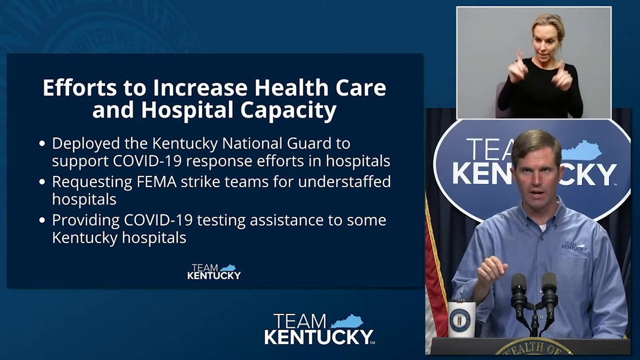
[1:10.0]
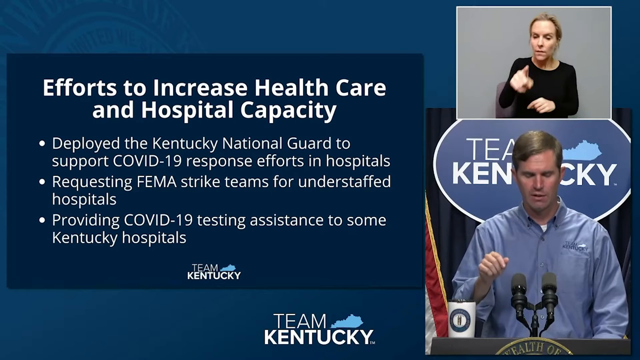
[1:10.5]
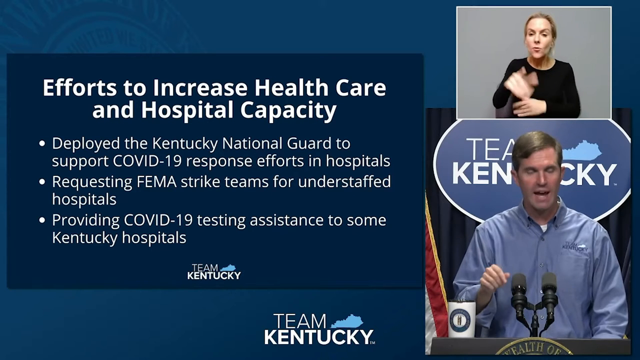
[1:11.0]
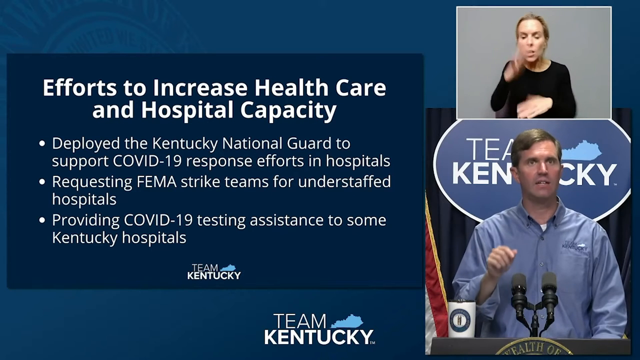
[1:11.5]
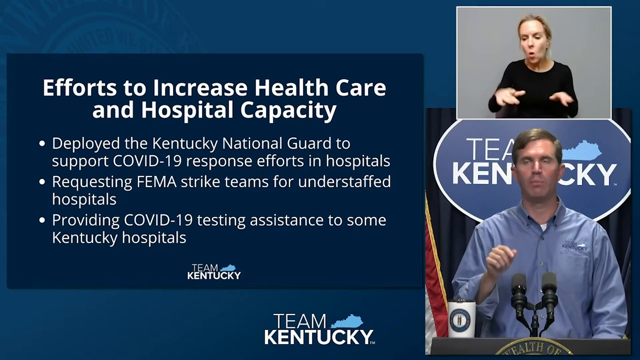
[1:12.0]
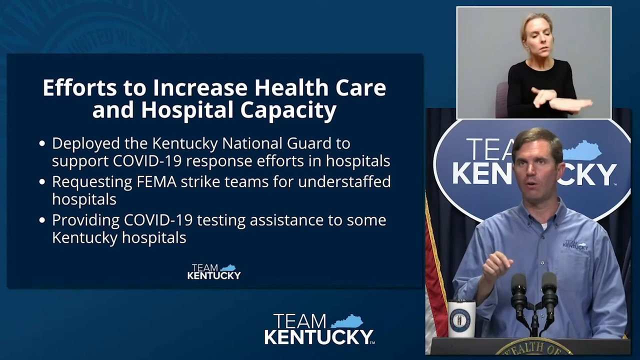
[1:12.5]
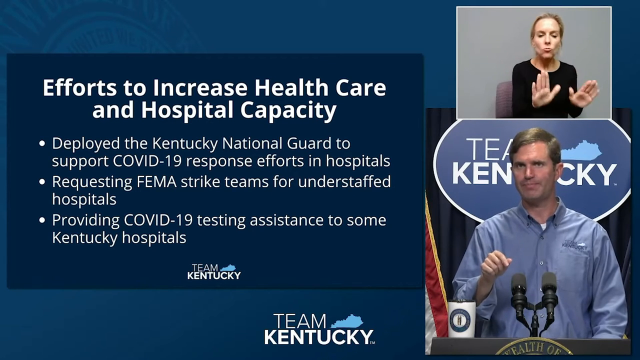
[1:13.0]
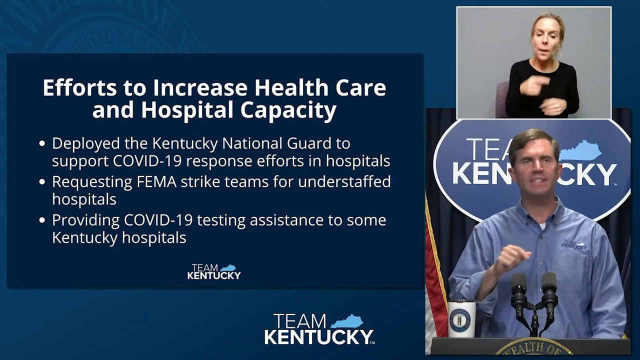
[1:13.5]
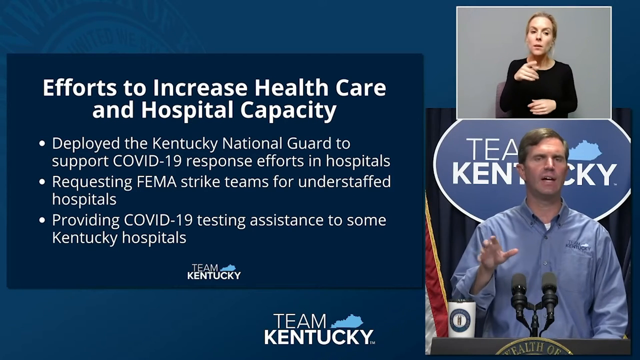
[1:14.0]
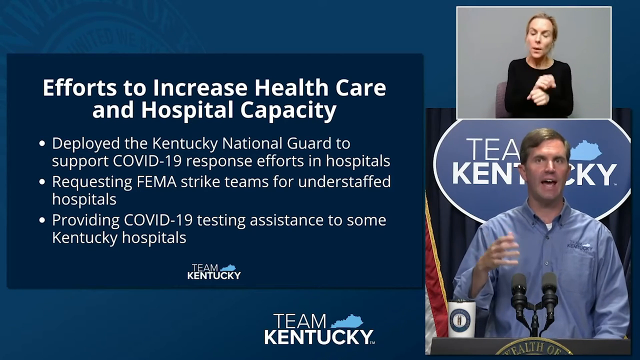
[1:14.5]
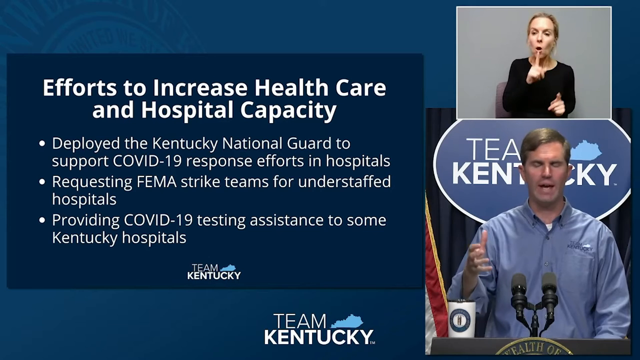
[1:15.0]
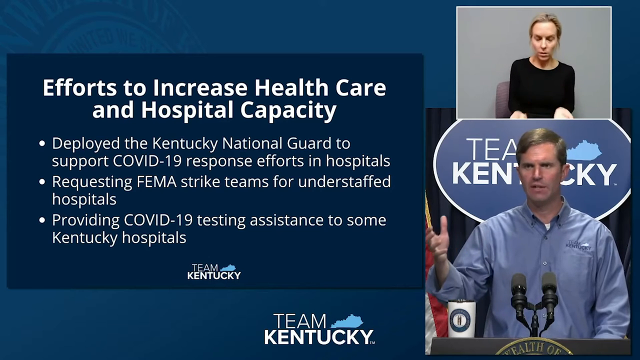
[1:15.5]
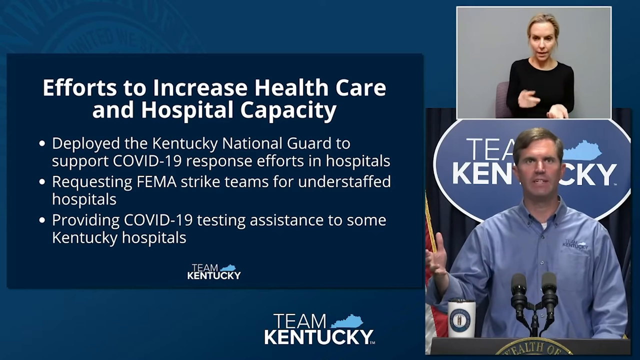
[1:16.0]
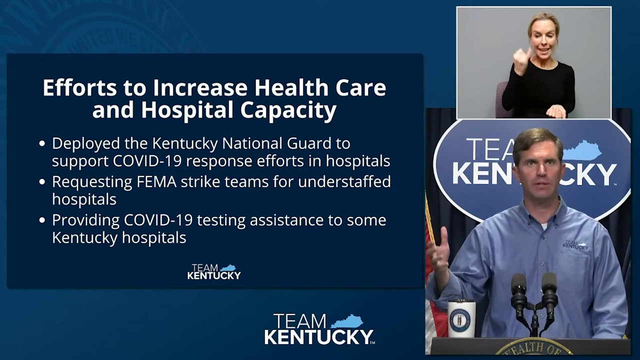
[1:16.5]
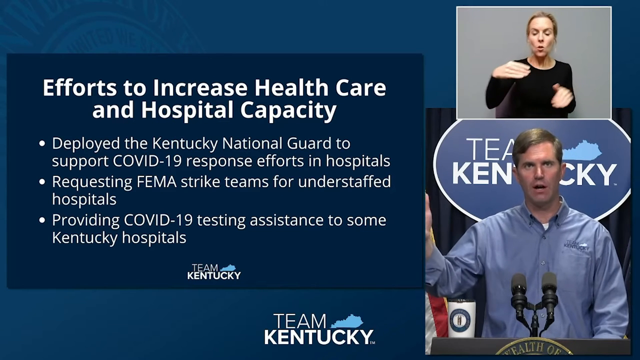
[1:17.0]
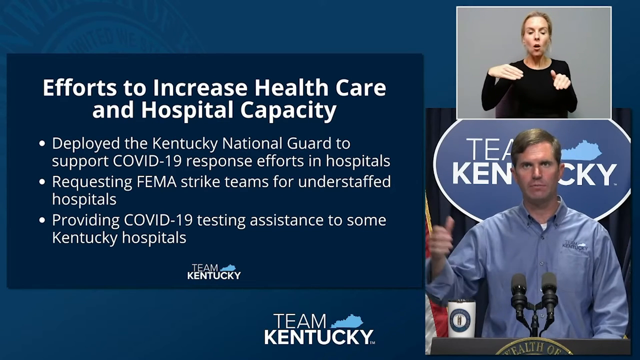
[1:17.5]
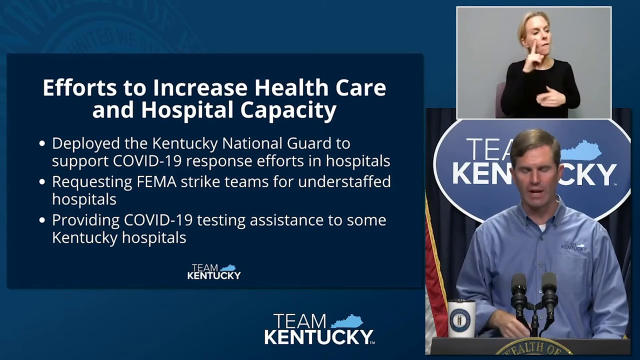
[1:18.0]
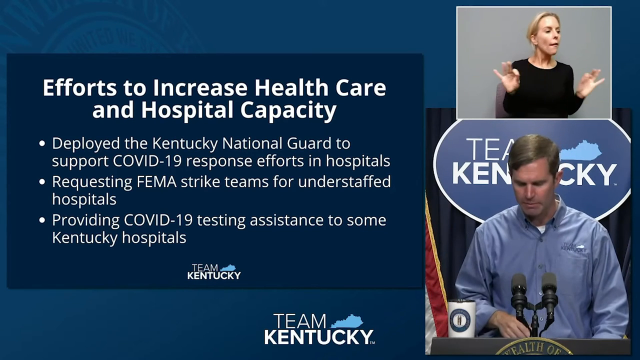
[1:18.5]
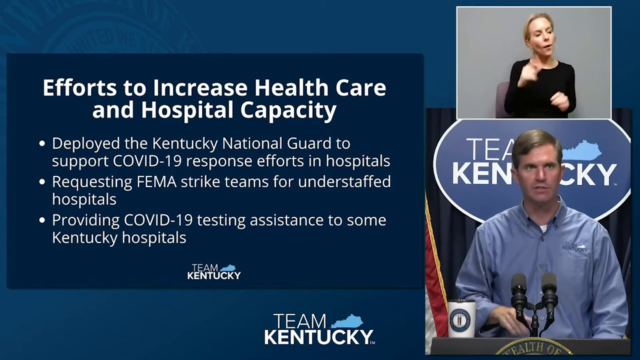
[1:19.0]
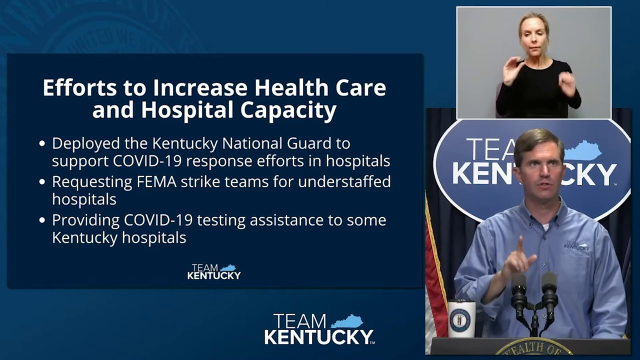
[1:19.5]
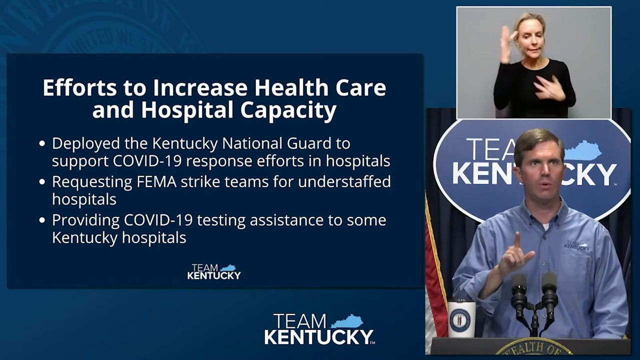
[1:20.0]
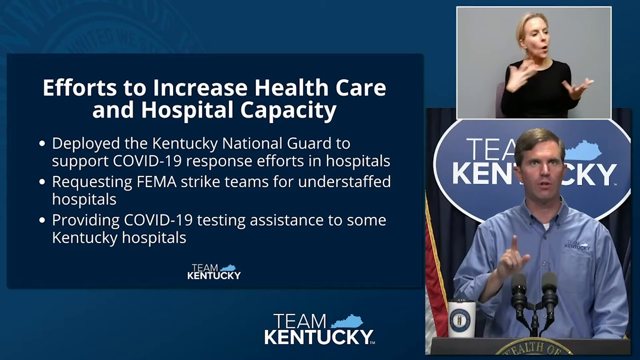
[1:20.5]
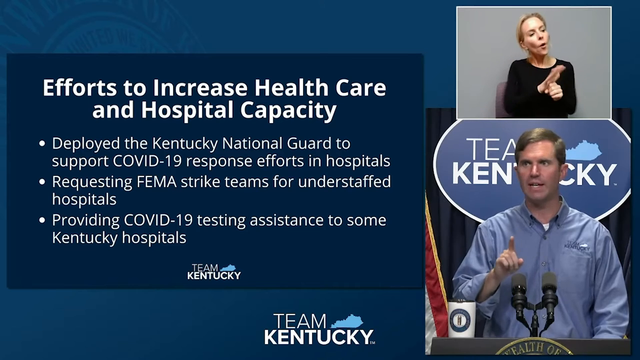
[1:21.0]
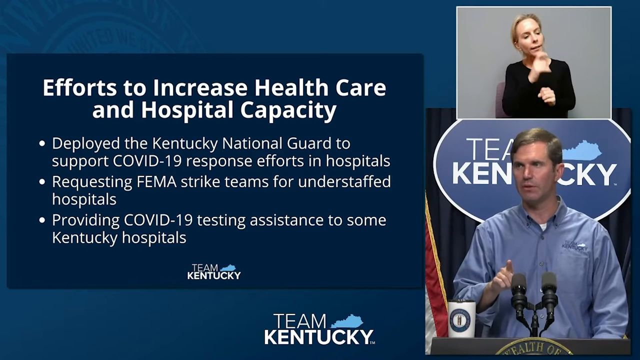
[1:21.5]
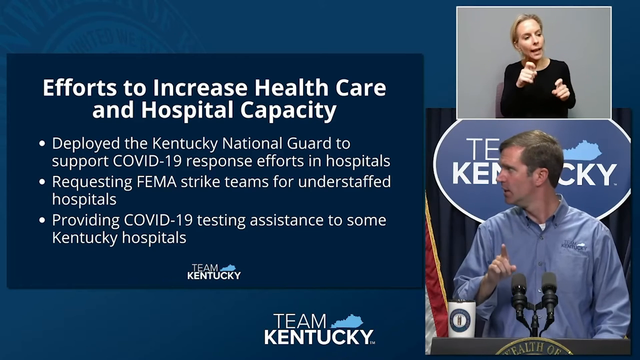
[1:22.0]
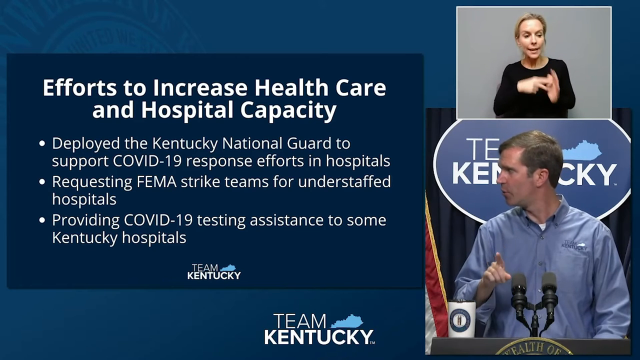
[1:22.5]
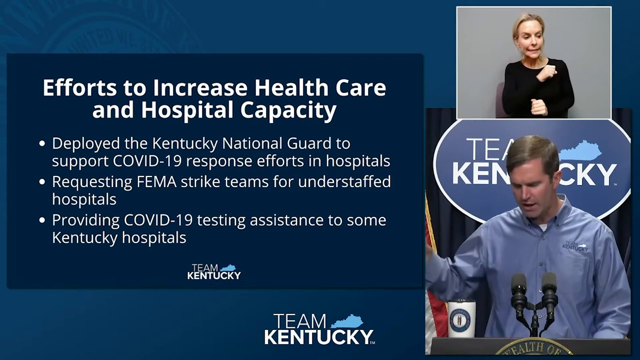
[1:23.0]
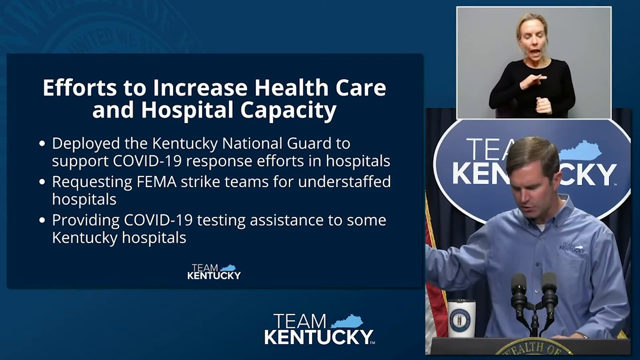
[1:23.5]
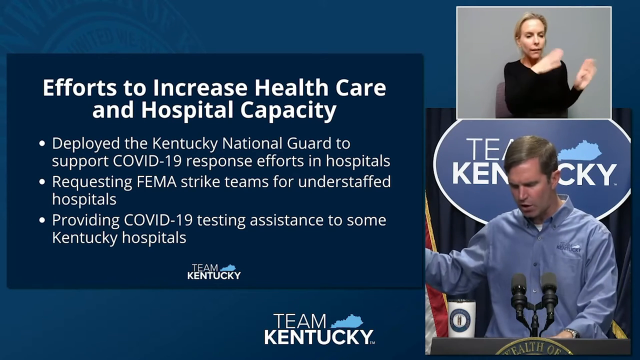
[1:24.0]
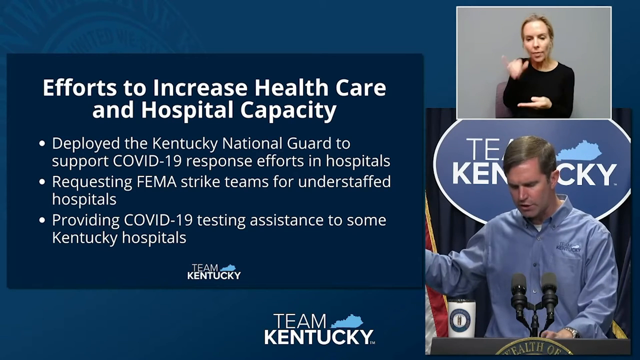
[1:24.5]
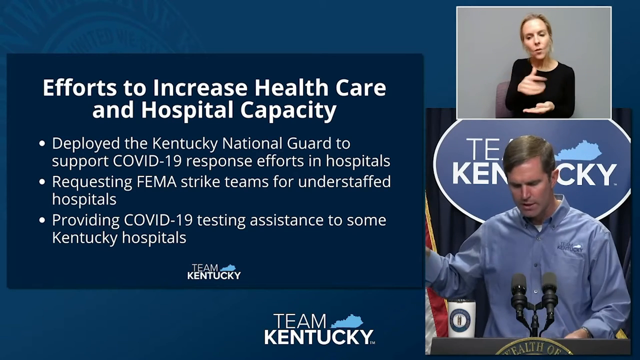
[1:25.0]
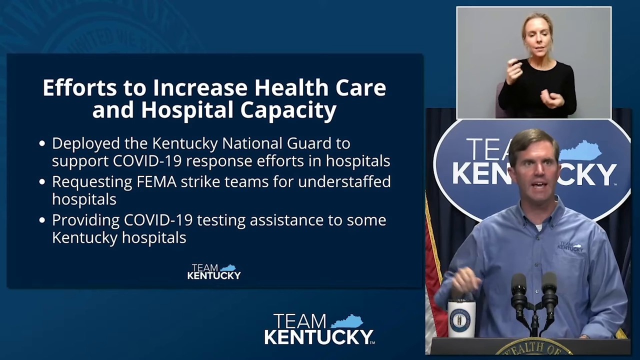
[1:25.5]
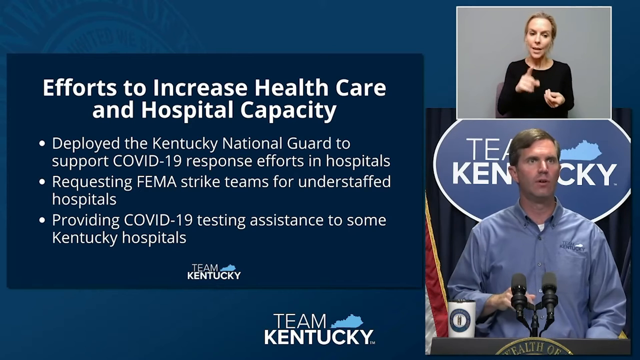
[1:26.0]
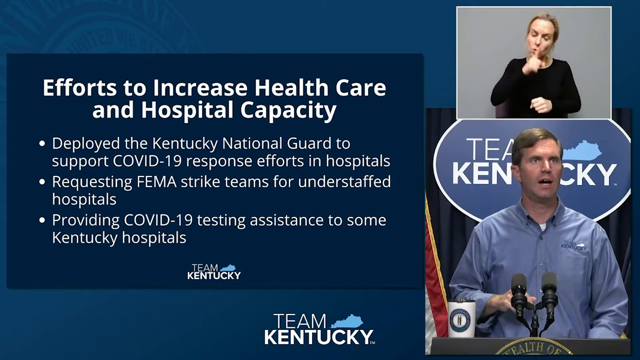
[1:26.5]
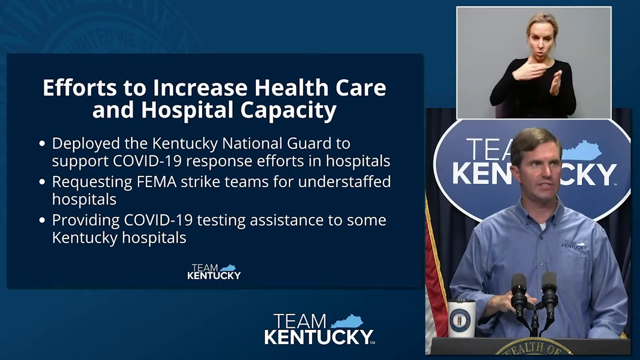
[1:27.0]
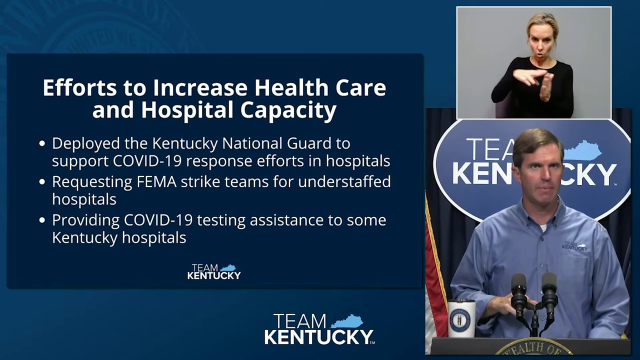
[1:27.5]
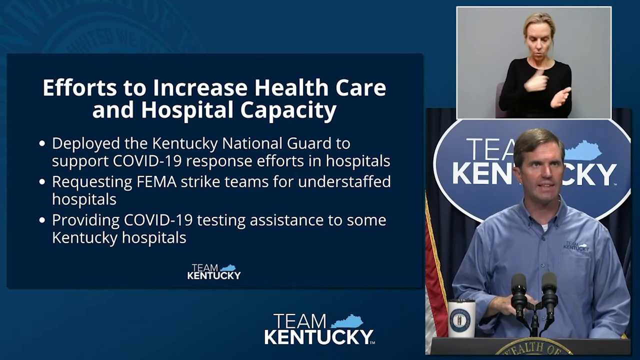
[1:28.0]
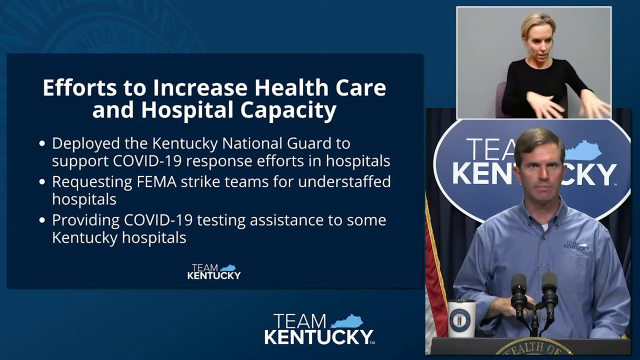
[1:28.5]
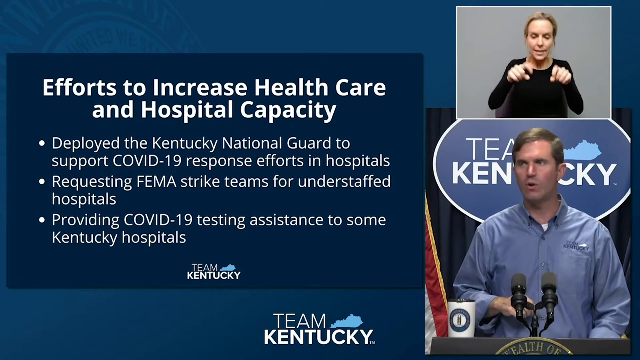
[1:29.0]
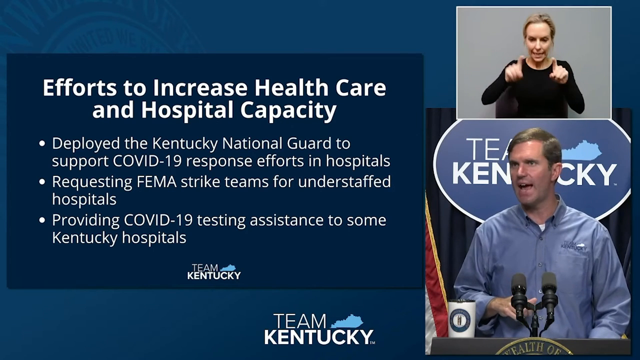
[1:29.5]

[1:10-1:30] A press conference during the COVID-19 outbreak takes place in Kentucky, and "Team Kentucky" appears in three different places, one of them behind the governor, who is talking in the lower right-hand corner of the screen. In the upper right-hand corner, a woman in a black shirt talks with her hands, doing sign language for those who are deaf or hard of hearing. On the left side of the screen is the title "Efforts to Increase Healthcare and Hospital Capacity" with three bullet points beneath it: "Deployed the Kentucky National Guard to support COVID-19 response efforts in hospitals," "Requesting FEMA strike teams for understaffed hospitals," and "Providing COVID-19 testing assistance to some Kentucky hospitals."